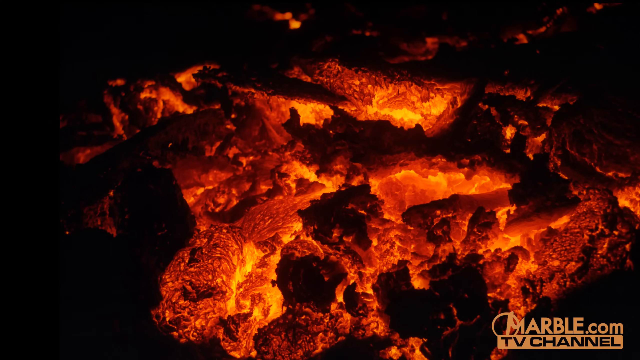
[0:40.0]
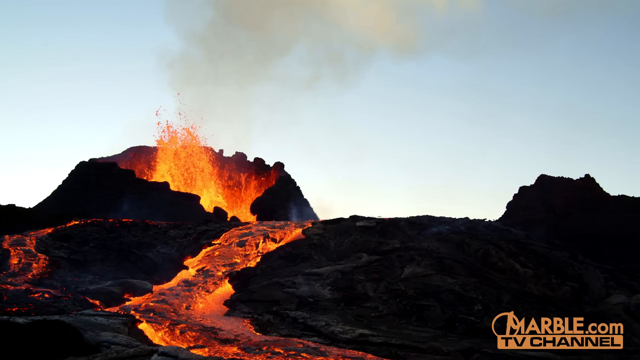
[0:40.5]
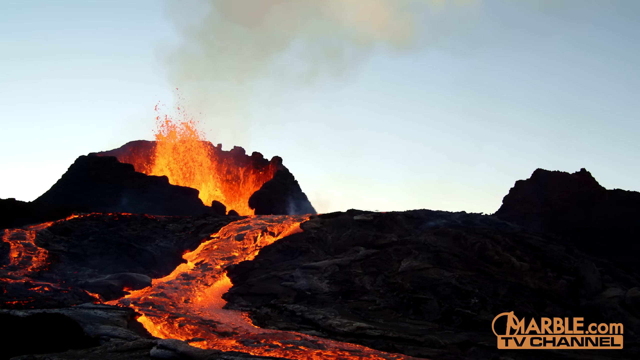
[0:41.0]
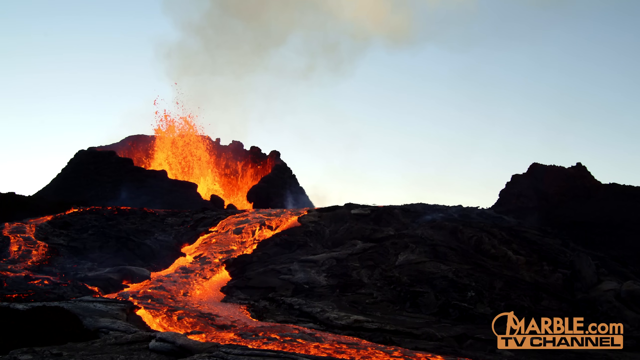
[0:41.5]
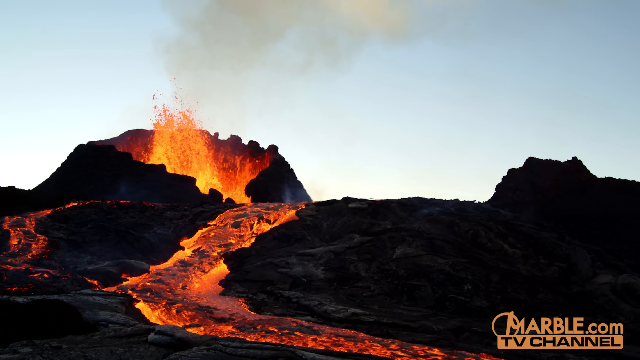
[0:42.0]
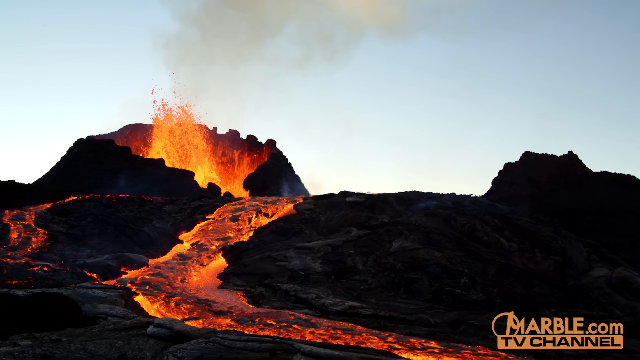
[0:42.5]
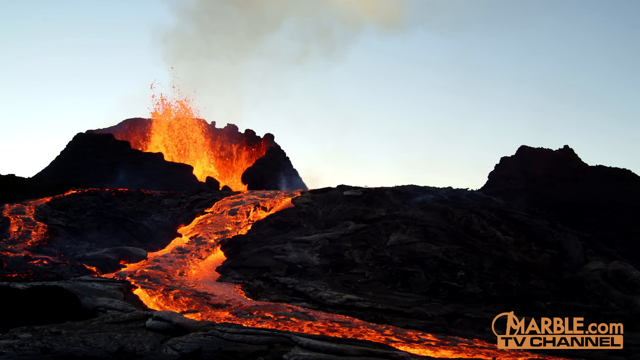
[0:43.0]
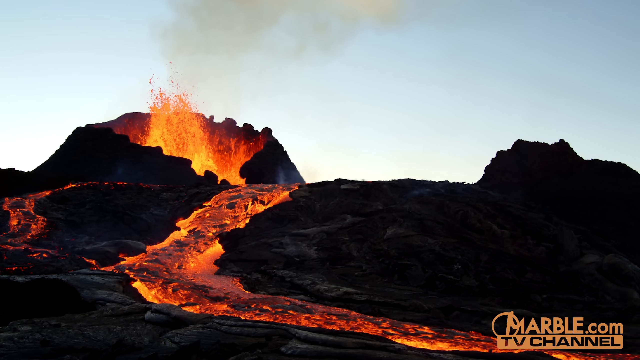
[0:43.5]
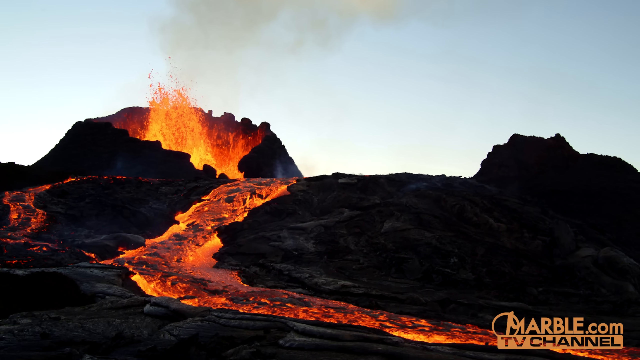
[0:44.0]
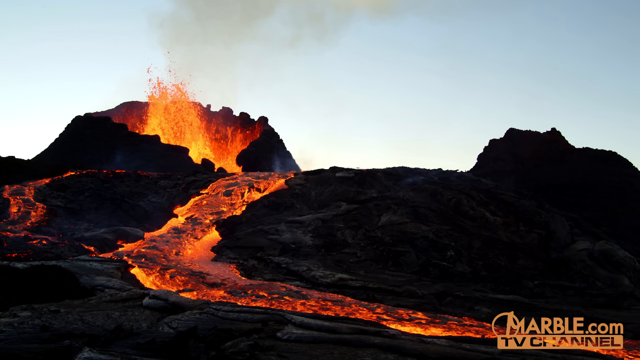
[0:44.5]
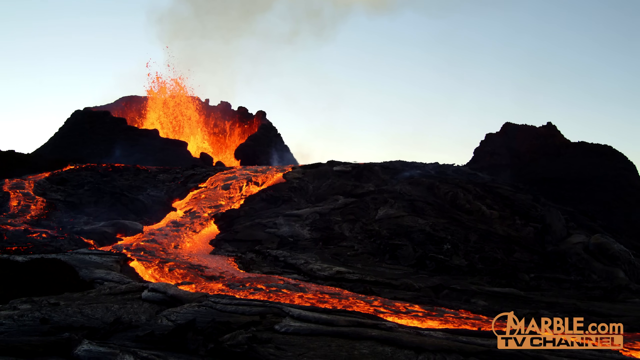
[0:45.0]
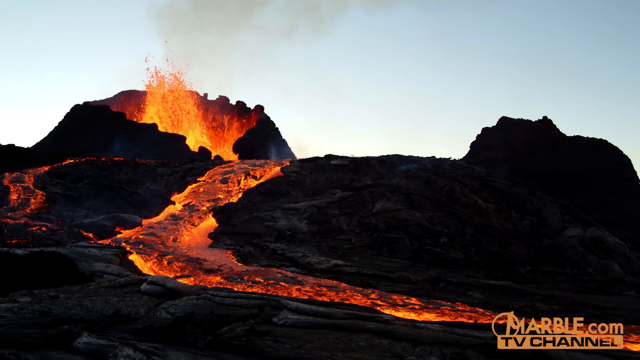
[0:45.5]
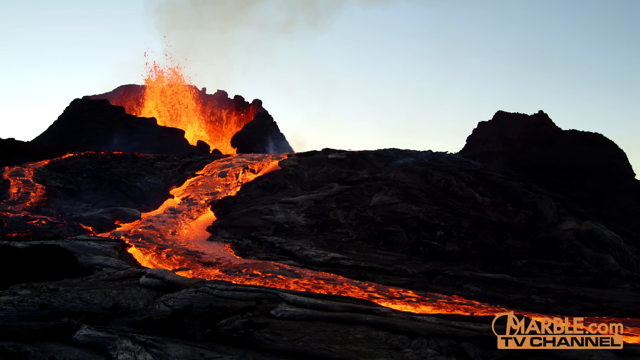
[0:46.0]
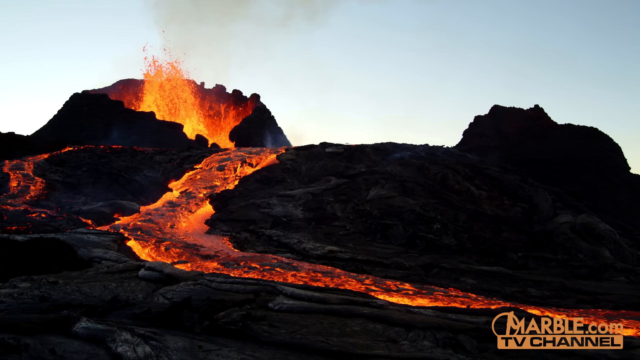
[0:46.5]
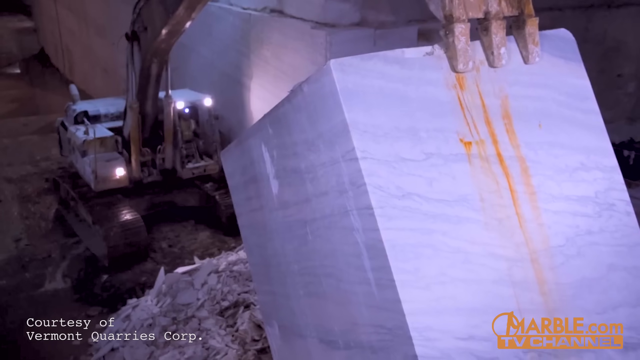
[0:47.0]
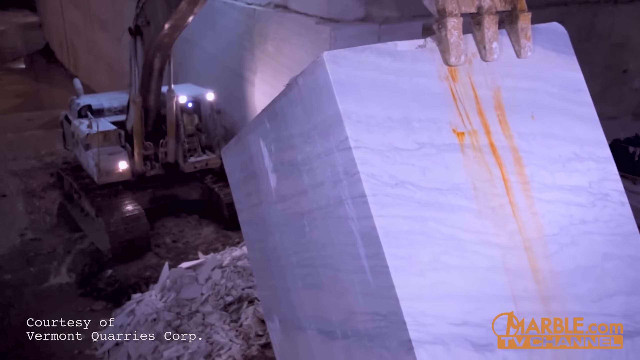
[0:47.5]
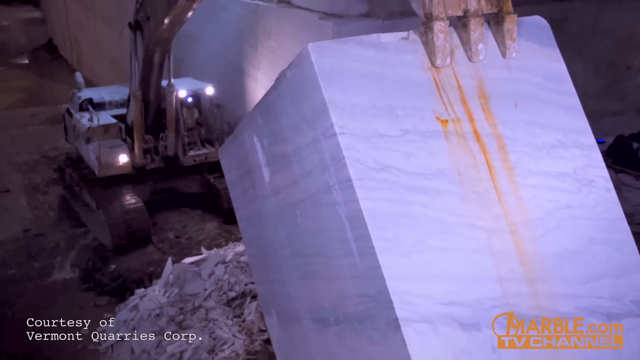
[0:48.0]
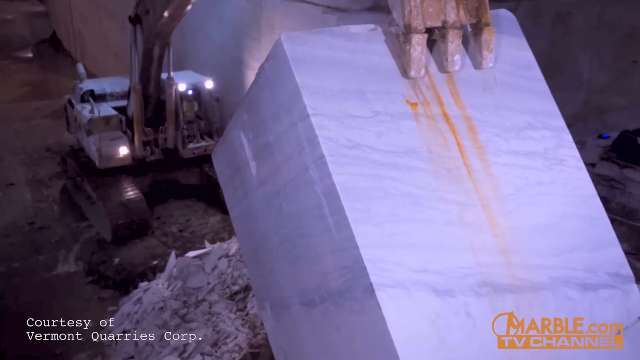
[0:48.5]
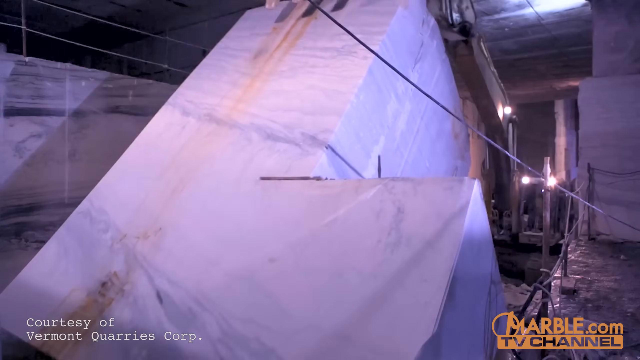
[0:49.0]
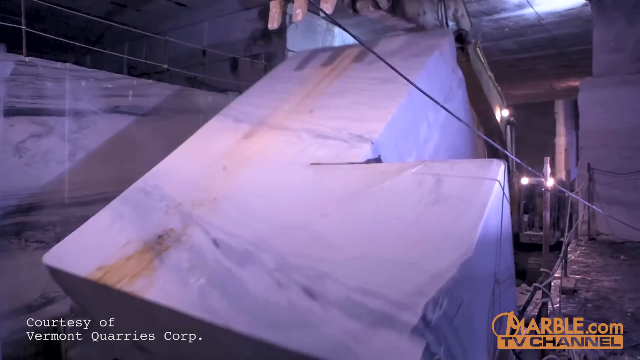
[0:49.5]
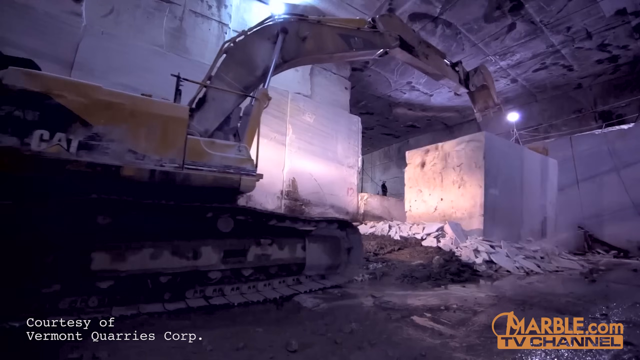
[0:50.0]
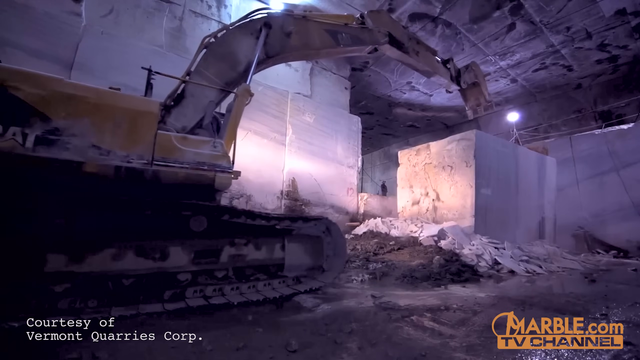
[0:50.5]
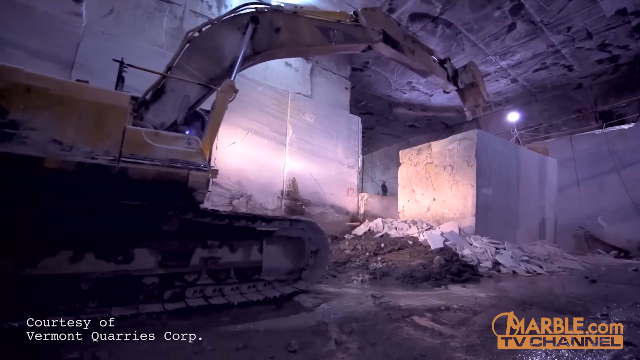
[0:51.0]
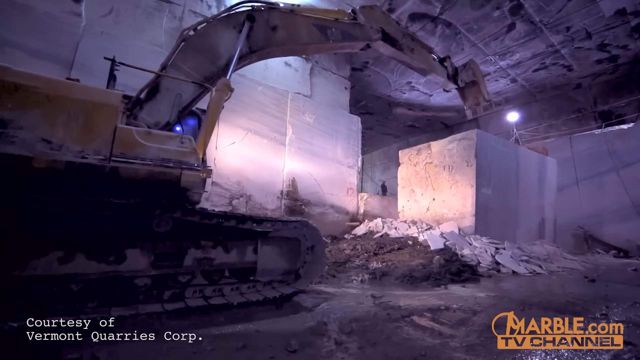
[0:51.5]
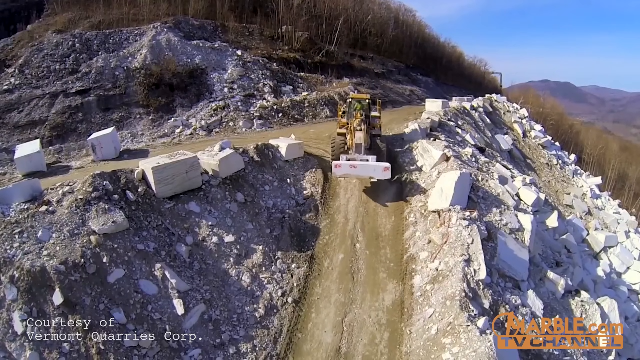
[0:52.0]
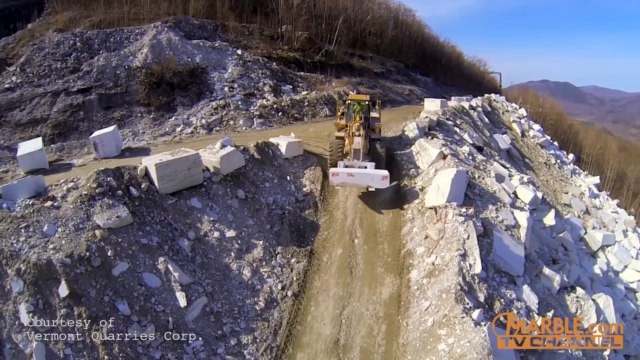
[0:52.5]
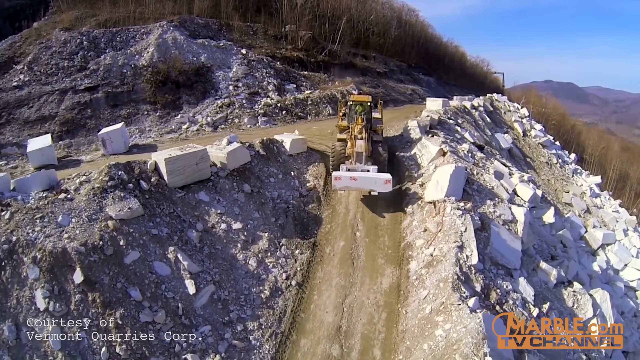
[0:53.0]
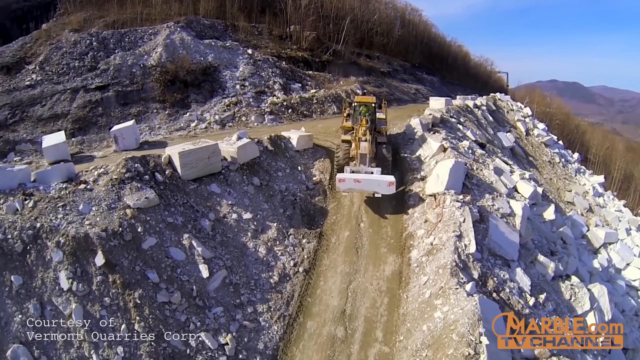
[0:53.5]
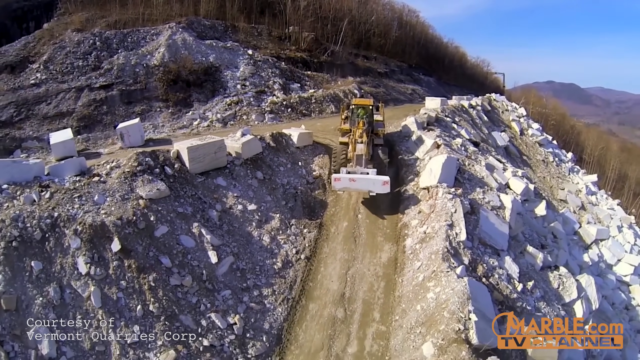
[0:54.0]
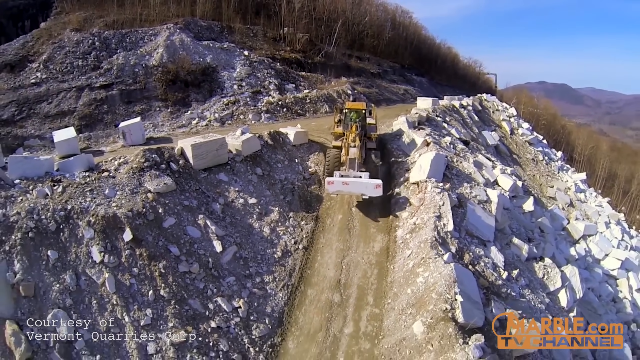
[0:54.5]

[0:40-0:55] From the close-up of the magma, the video shifts to a still image of a volcano actively erupting, with a spray of lava and a flow coming out alongside the volcano. Next is a close-up of a big cut slab of rock being shifted to the side by a forklift; its arm comes down and brings the marble onto its side. The same forklift is then shown driving down a steep dirt road, the side of which is littered with big pieces of rock.